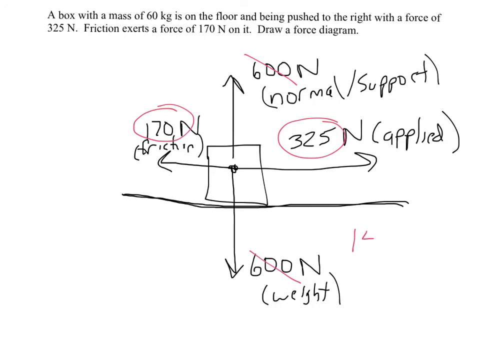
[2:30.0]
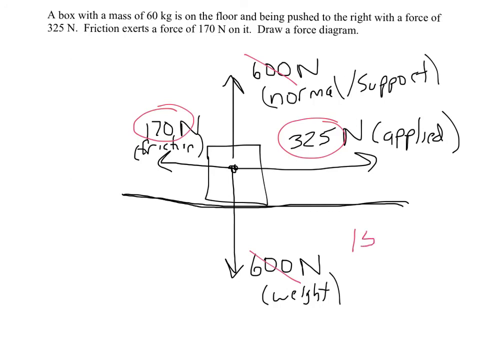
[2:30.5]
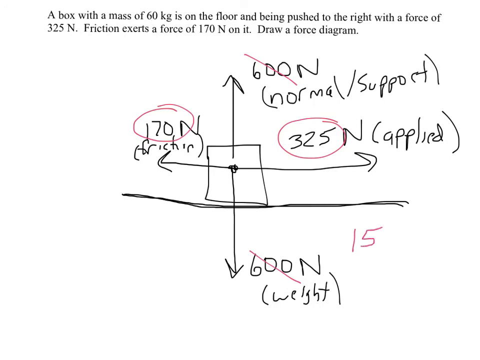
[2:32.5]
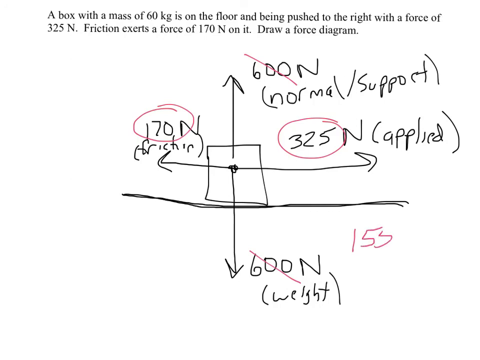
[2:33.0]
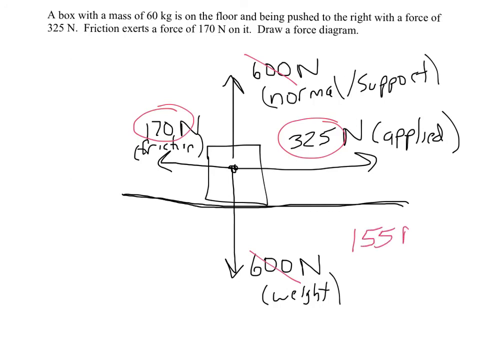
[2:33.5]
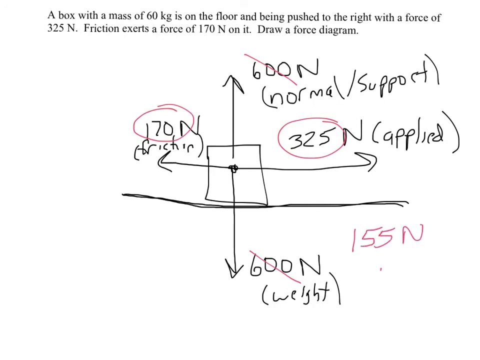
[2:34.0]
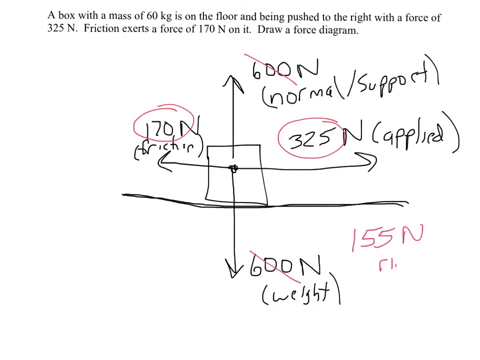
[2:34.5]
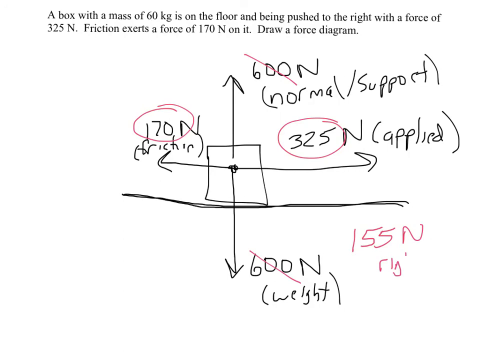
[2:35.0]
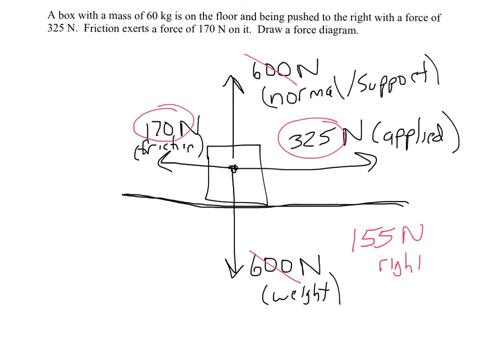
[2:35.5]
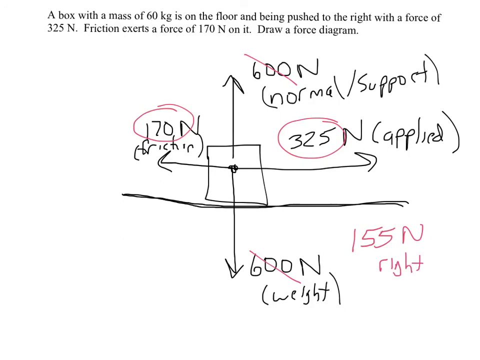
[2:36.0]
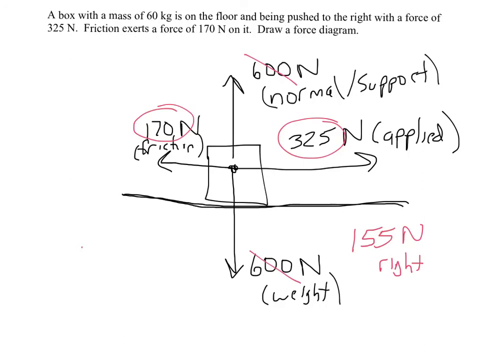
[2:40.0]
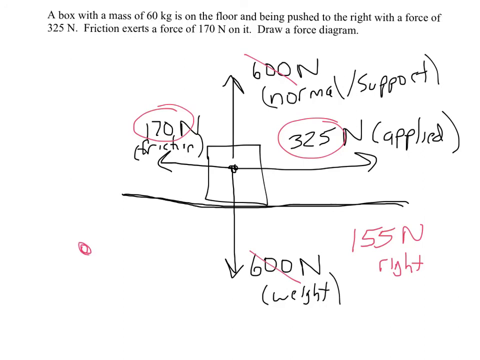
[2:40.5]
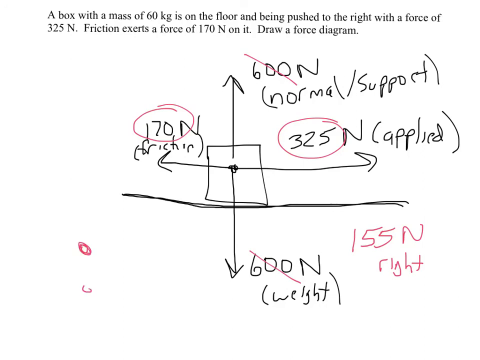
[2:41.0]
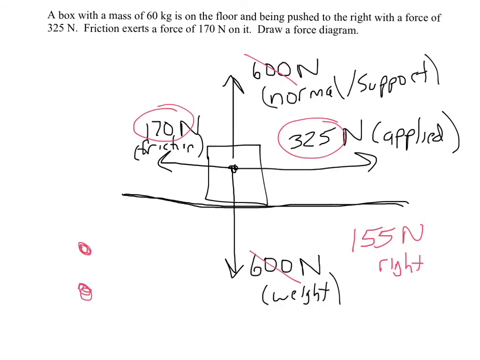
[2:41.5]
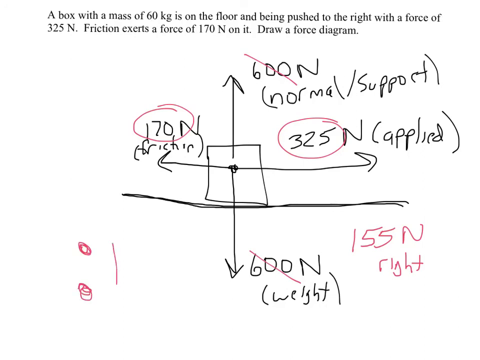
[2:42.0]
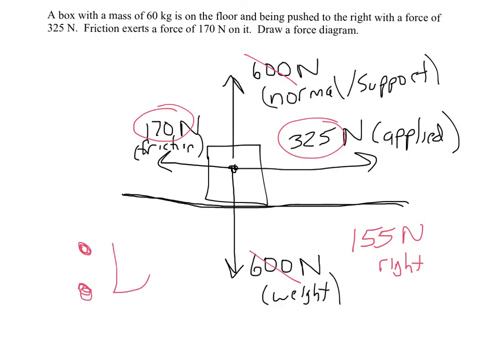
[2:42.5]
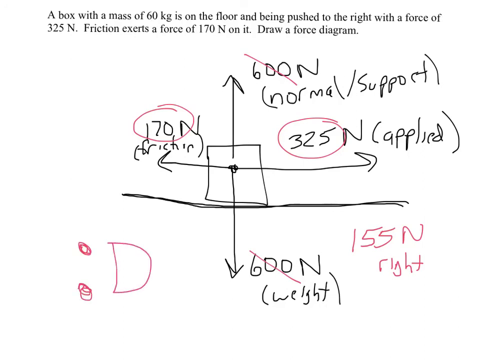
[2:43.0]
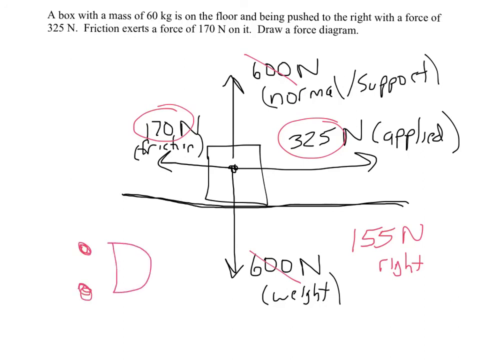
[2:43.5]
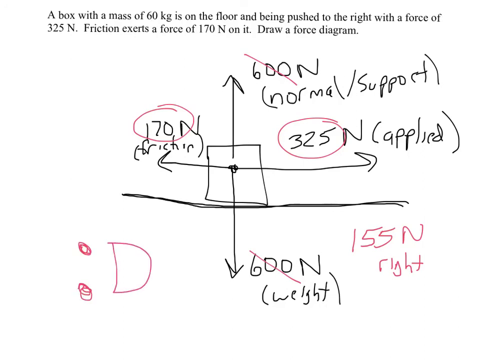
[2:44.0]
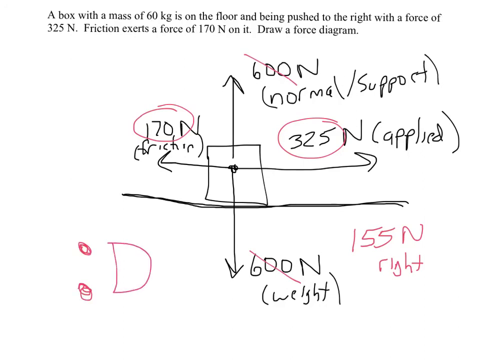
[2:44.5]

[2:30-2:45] After the 600 N forces are cancelled and 170 N and 325 N are highlighted, the person draws an image in ink on the left-hand side: two dots and a sketch of half a circle. At the bottom right, the person writes "155 Newtons" and the word "right", apparently the solution to the problem. The video ends with the person drawing an image in red ink; all of this is done in red ink.